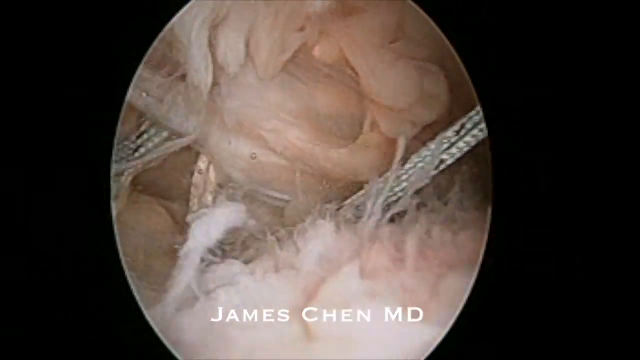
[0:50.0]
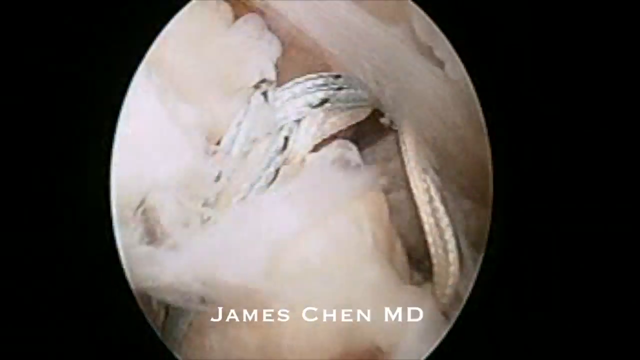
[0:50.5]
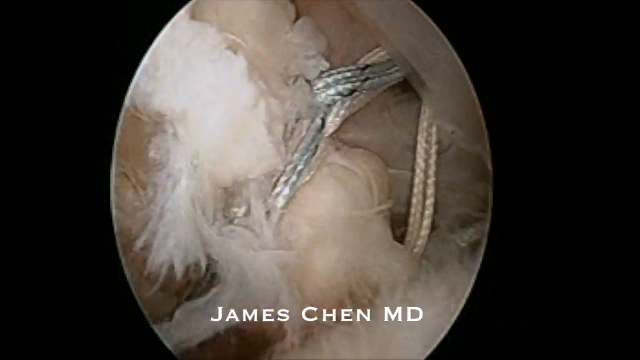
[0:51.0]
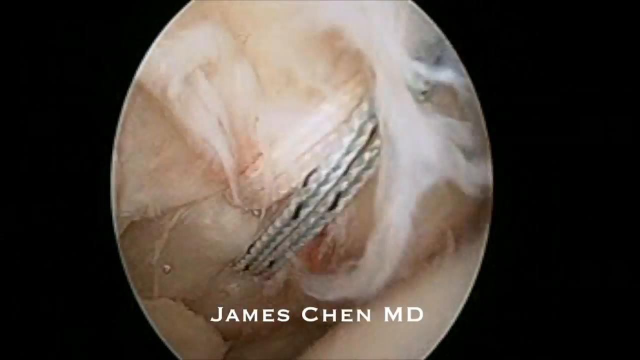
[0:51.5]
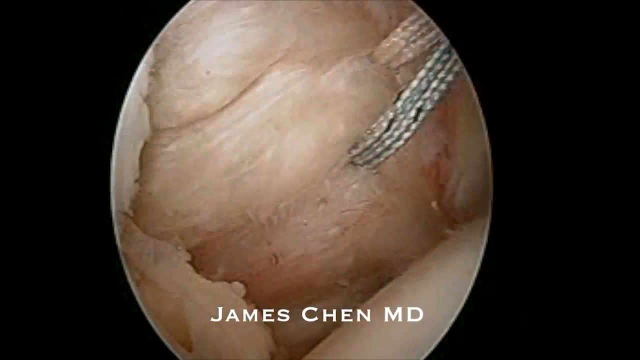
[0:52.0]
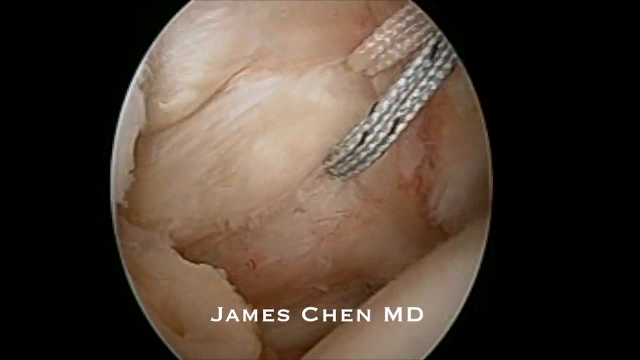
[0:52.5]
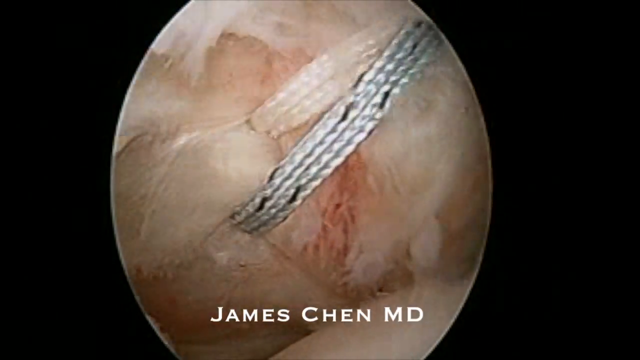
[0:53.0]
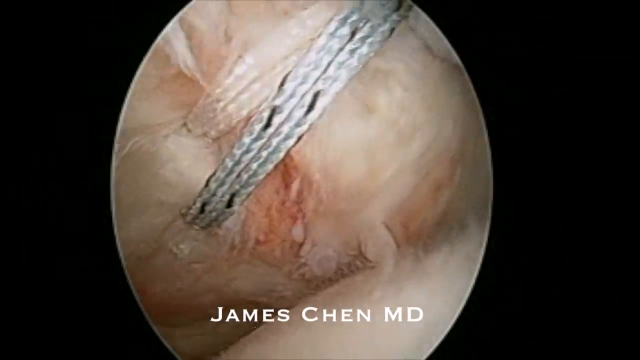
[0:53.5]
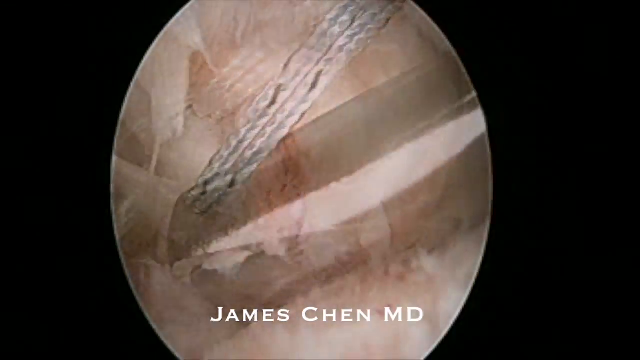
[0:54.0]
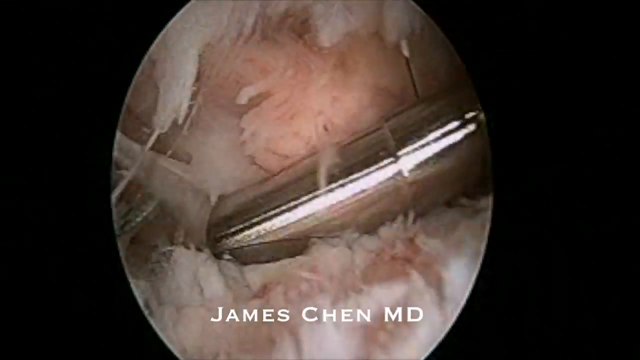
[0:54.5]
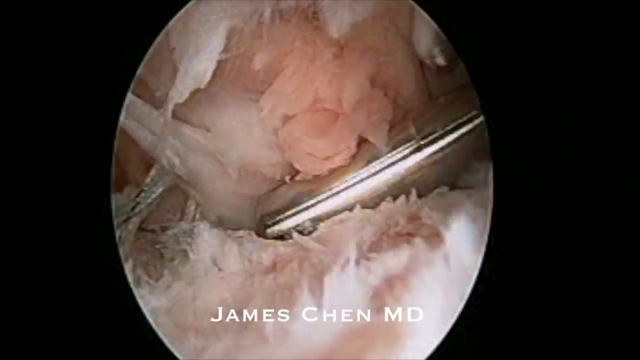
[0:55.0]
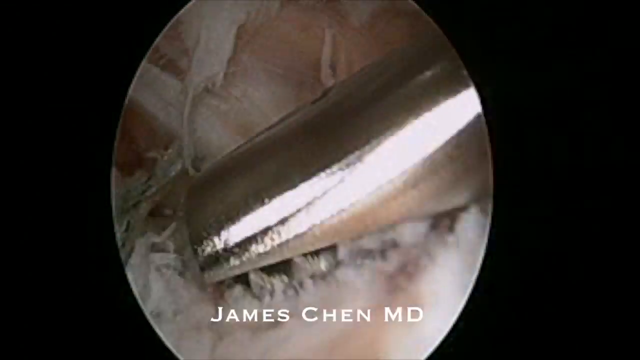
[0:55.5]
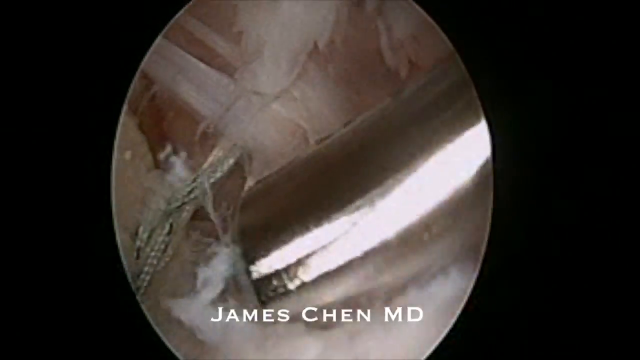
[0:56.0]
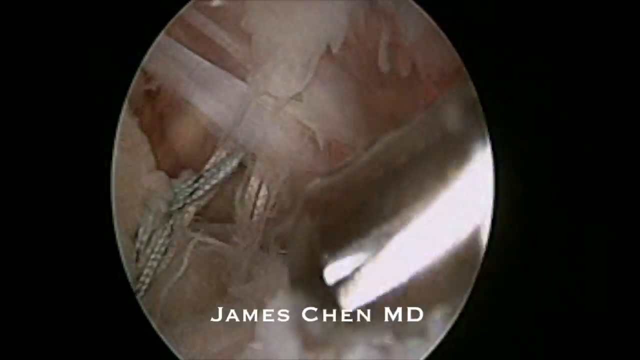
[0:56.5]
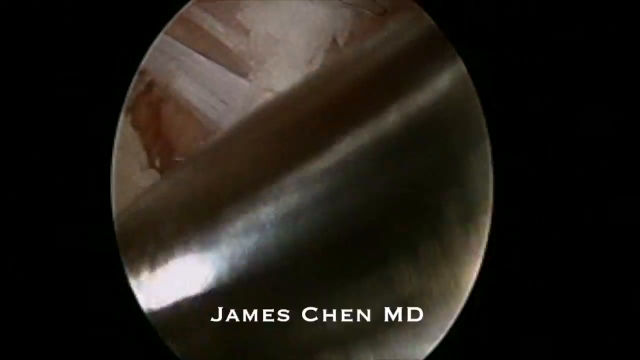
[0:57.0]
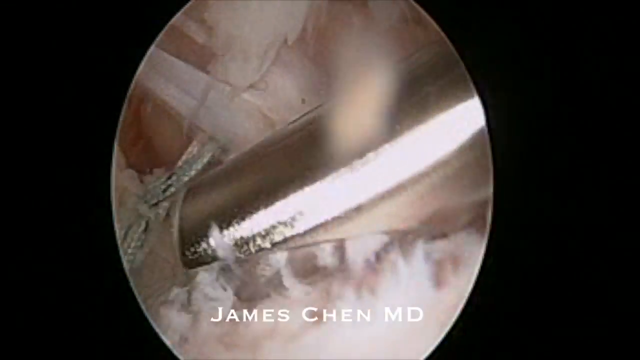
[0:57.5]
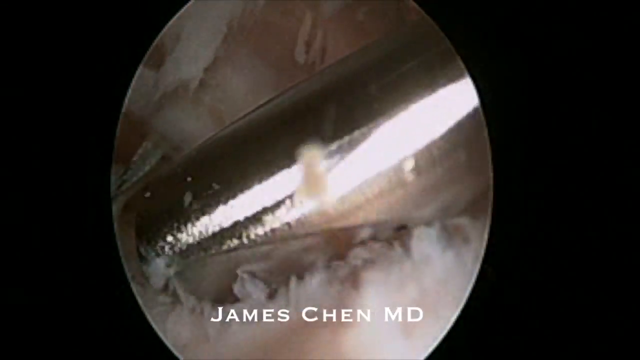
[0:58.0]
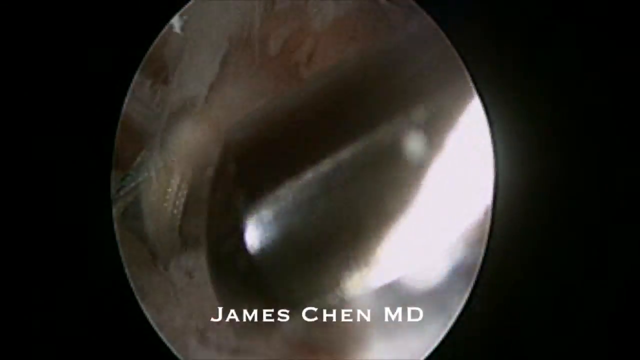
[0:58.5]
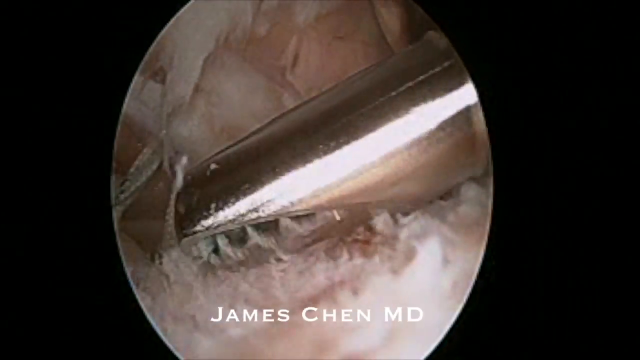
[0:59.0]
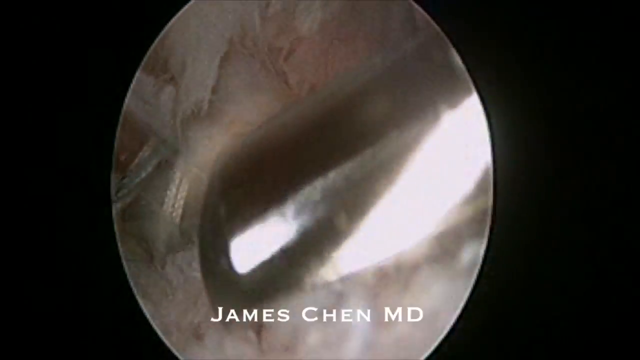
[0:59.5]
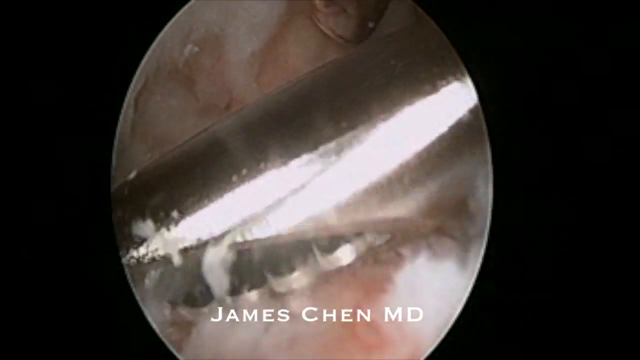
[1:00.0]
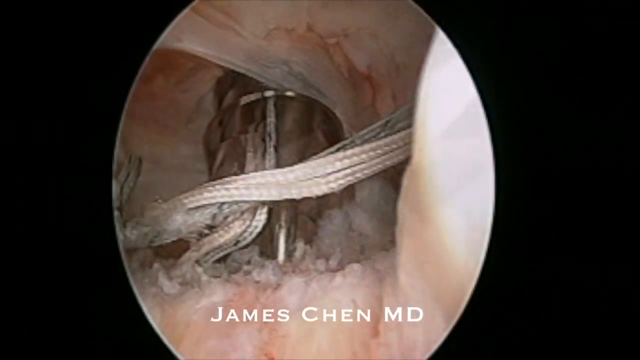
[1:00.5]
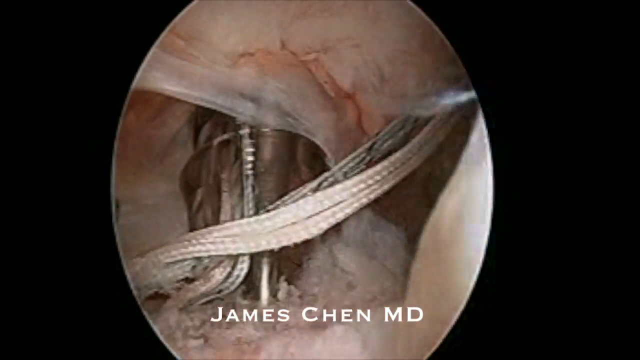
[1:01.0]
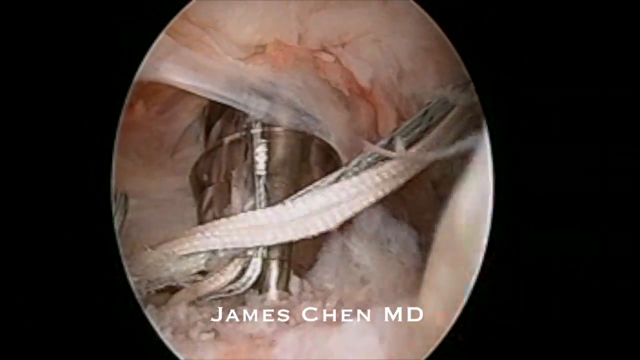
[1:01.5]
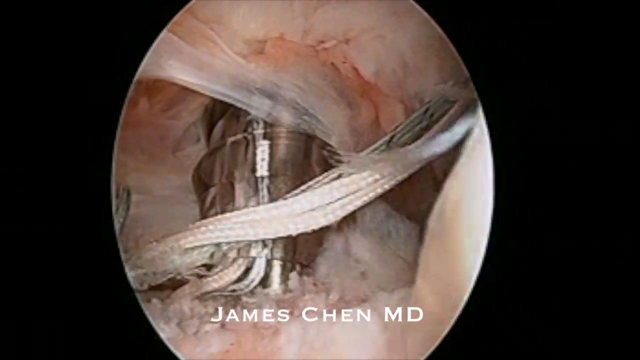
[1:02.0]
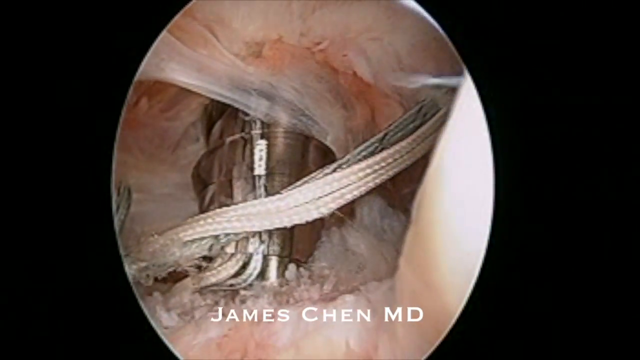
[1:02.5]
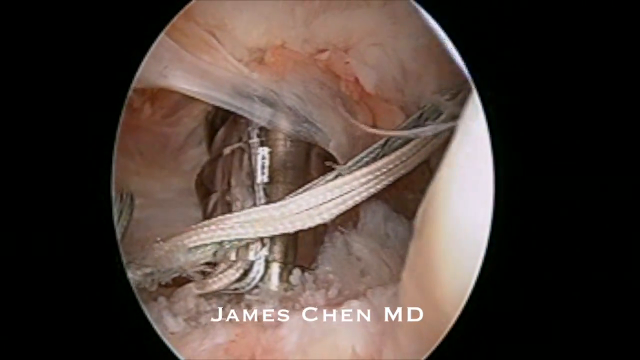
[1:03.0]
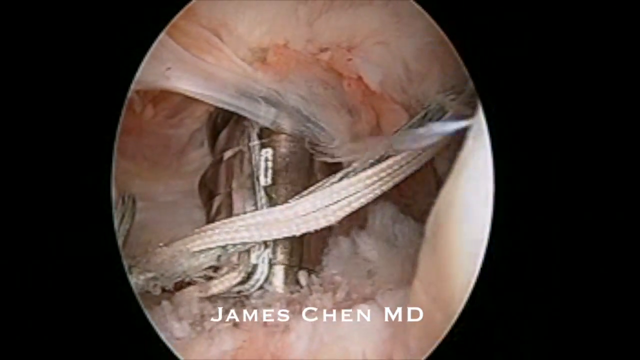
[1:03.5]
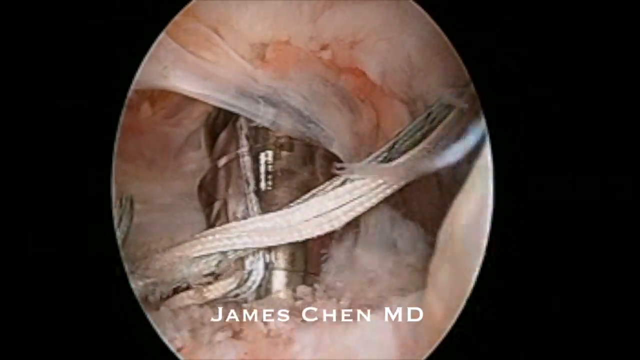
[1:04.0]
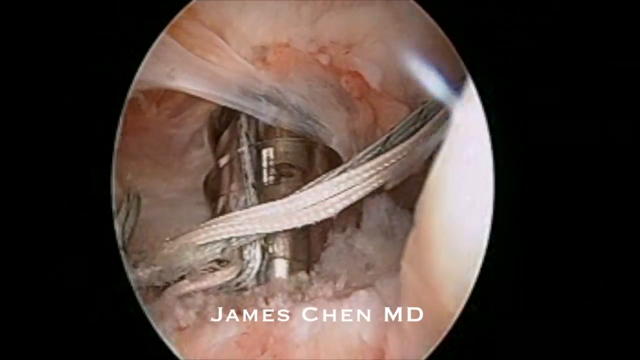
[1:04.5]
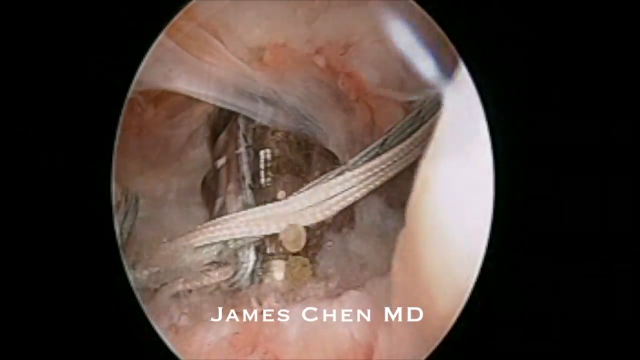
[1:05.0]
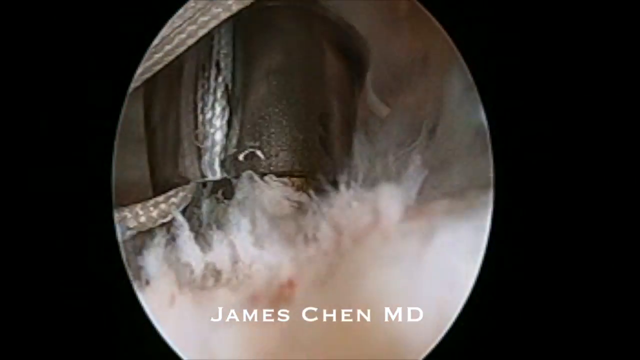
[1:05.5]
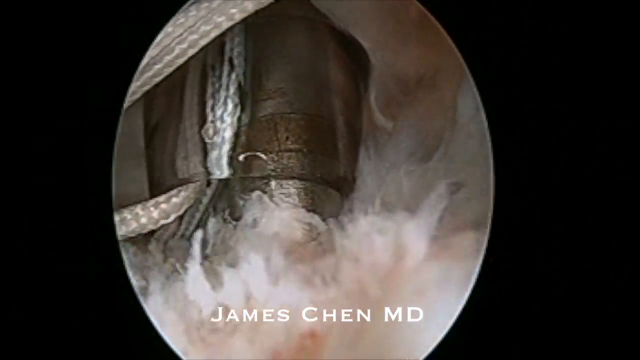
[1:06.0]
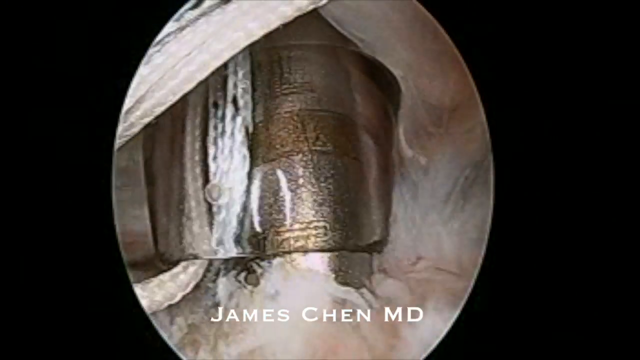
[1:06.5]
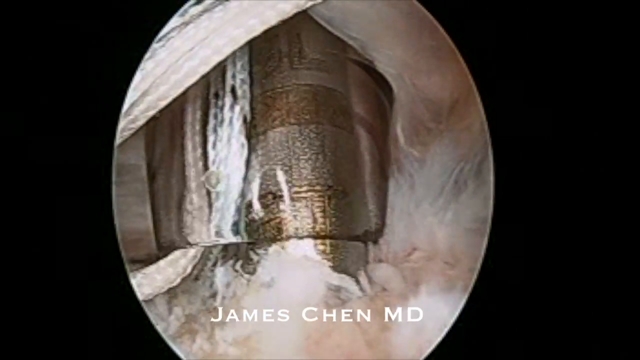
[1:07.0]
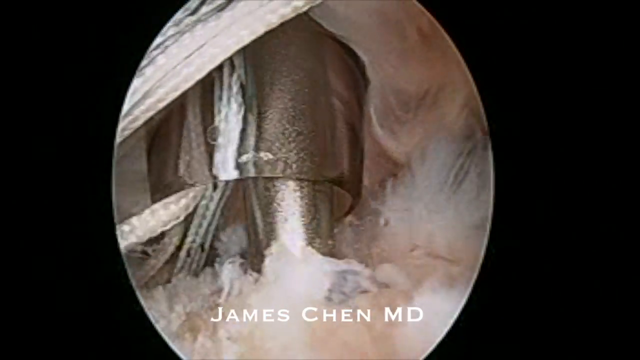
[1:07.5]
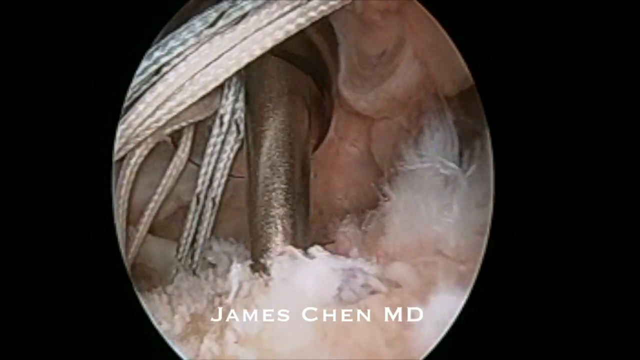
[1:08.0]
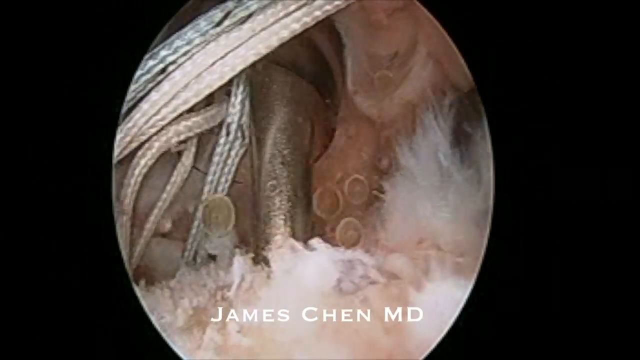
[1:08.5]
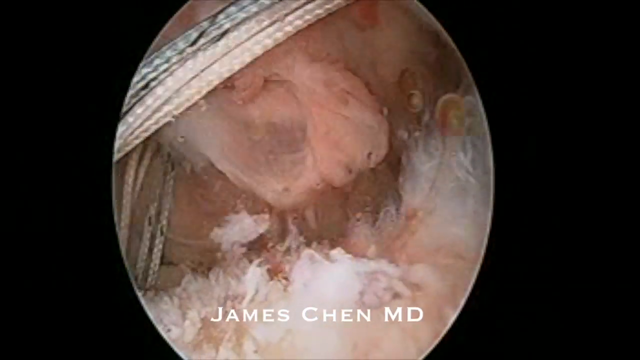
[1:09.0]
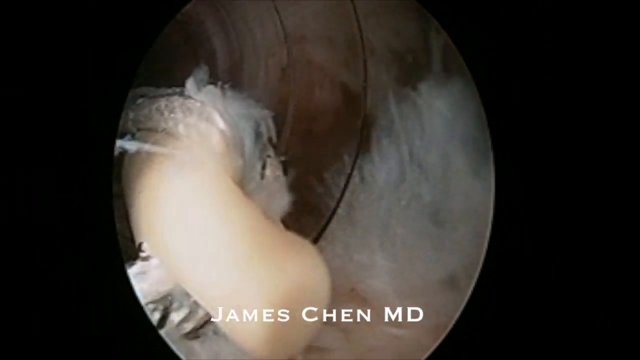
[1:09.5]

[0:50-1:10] The camera continues moving within the body to different parts of the rope used to tie off specific parts. The instrument moves left and right inside the image, and as it moves, tiny specks of the rope appear to be kicked up. Part of what almost looks like a metal piece that encapsulates the rope is visible, and this metal piece turns in a circle, almost as if helping the camera make its way through the body so the doctor can see; it looks like a boring instrument used to help the instrument or camera move within the body. The ends of the strands of rope move back and forth somewhat, as if there were wind there.